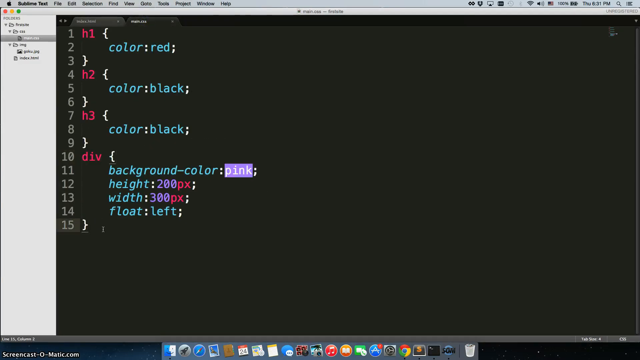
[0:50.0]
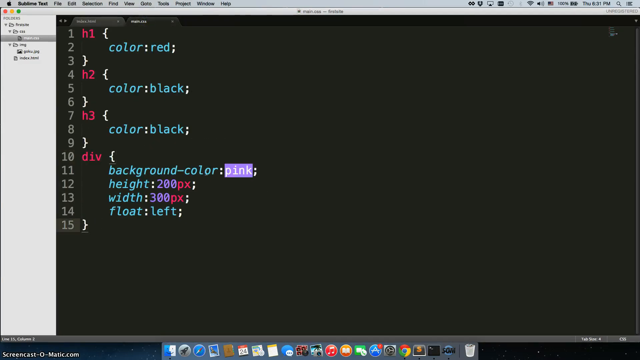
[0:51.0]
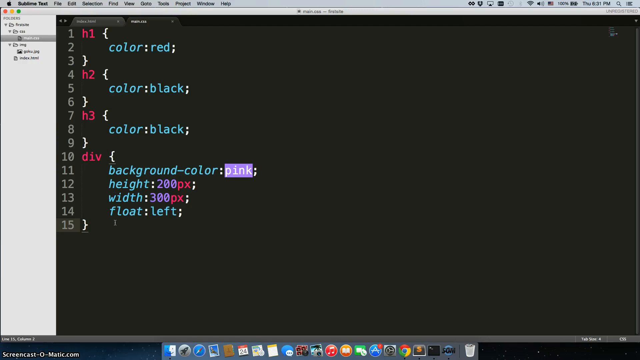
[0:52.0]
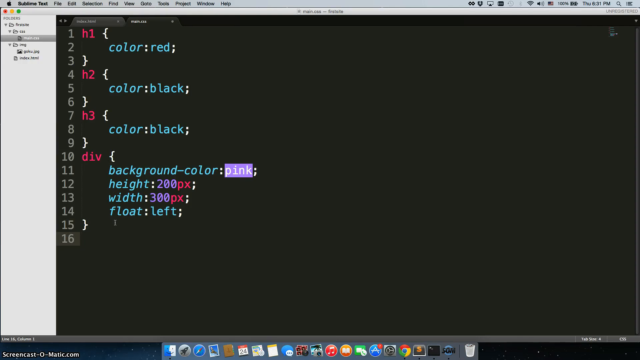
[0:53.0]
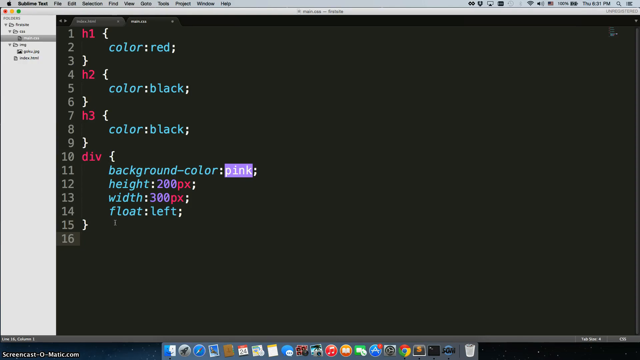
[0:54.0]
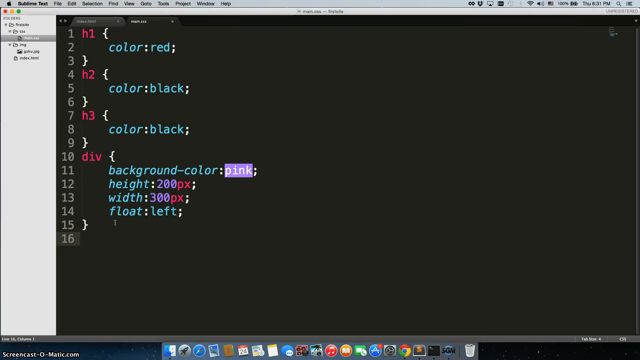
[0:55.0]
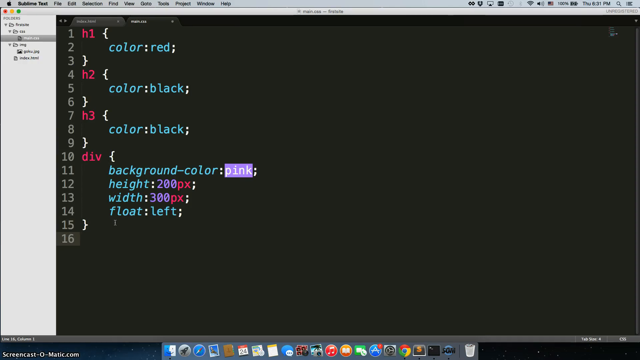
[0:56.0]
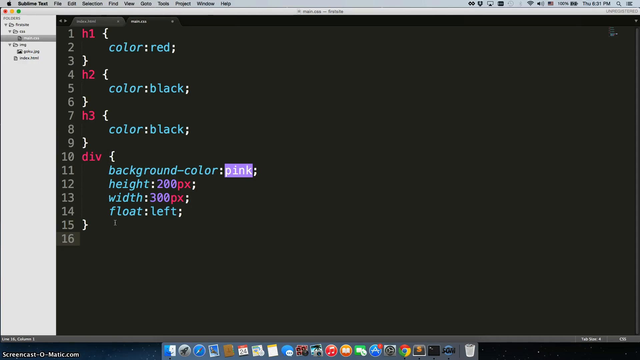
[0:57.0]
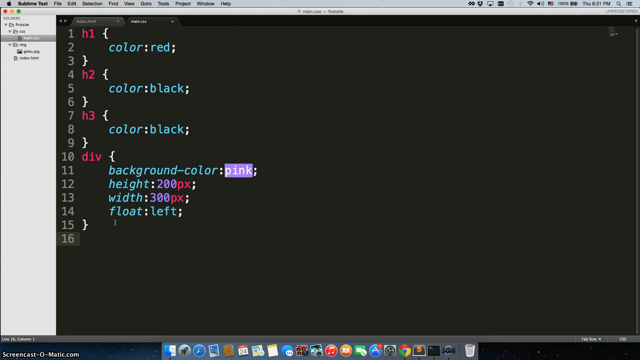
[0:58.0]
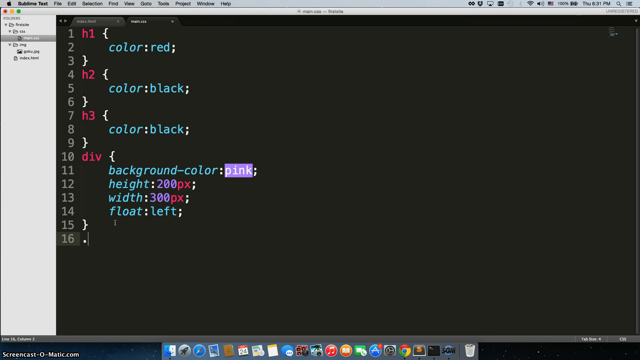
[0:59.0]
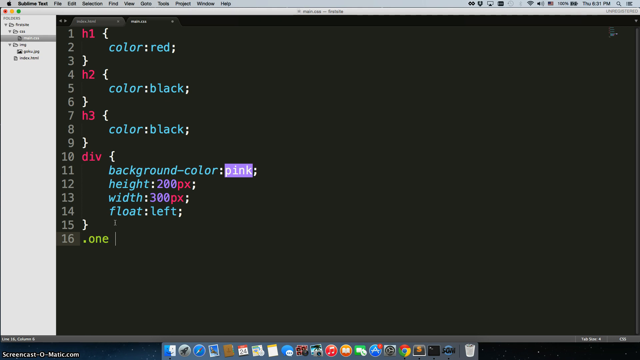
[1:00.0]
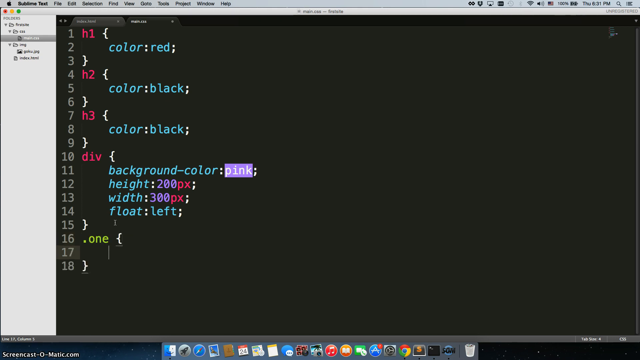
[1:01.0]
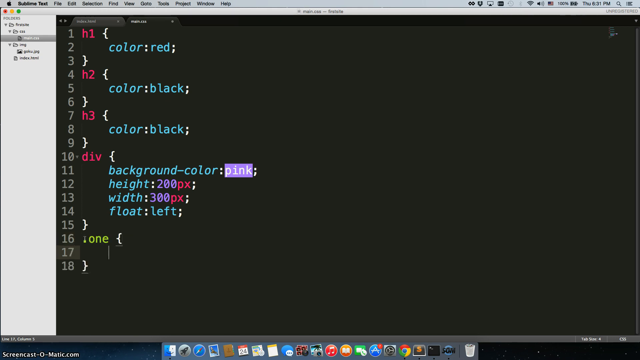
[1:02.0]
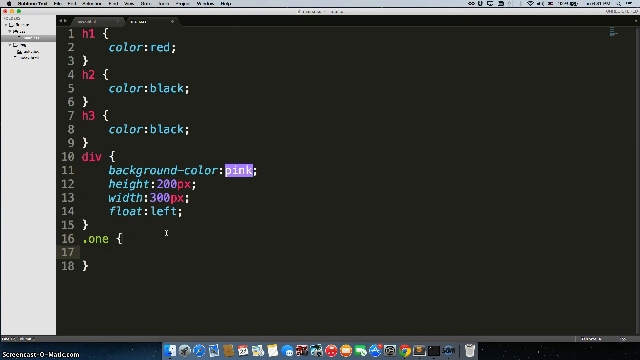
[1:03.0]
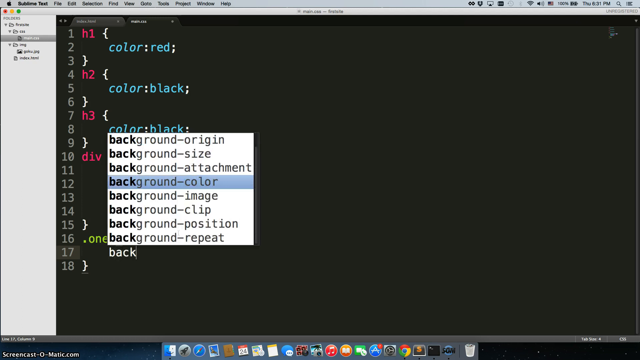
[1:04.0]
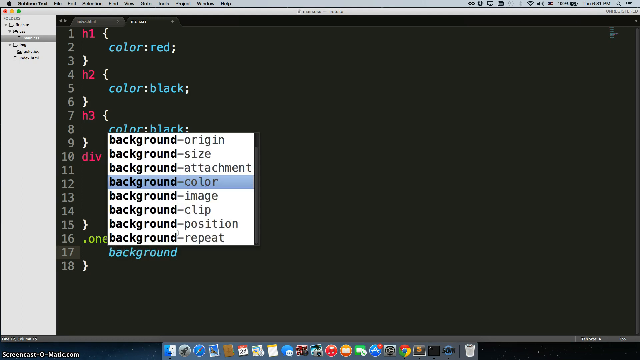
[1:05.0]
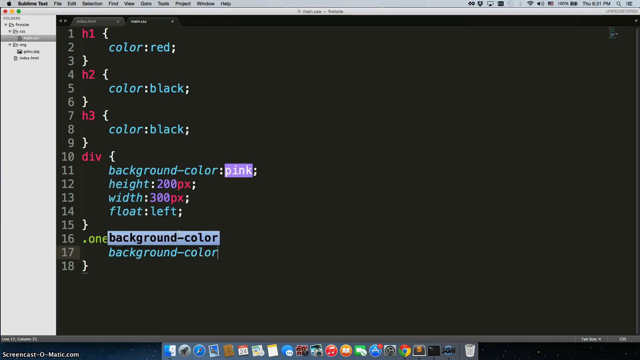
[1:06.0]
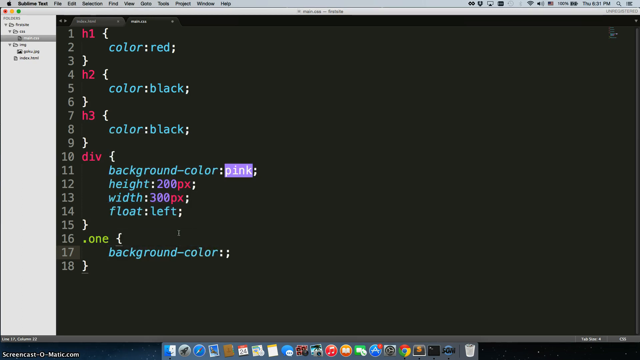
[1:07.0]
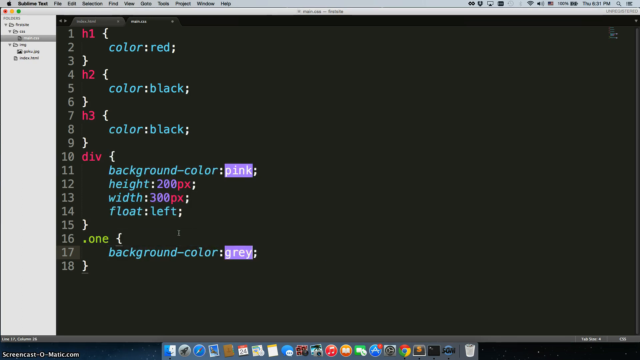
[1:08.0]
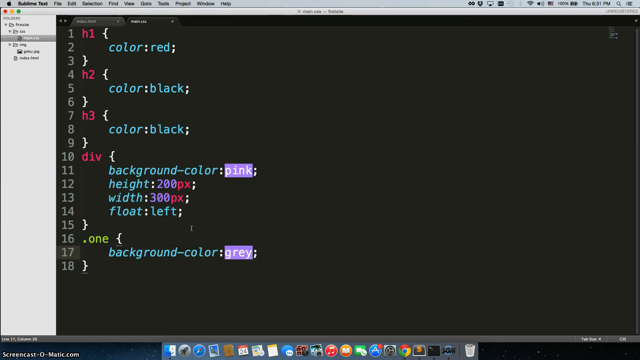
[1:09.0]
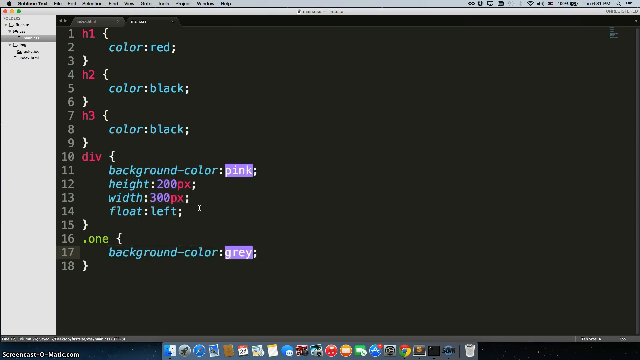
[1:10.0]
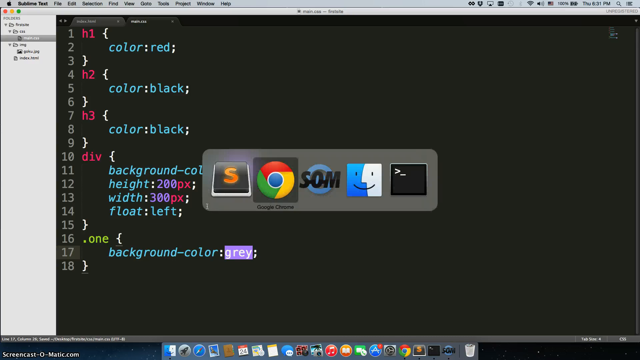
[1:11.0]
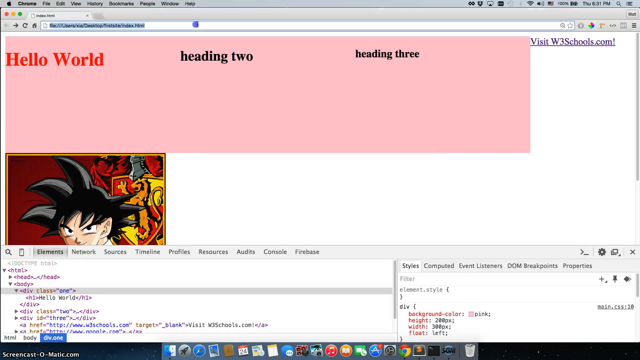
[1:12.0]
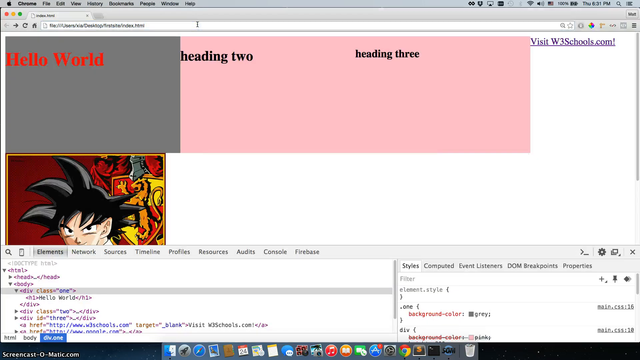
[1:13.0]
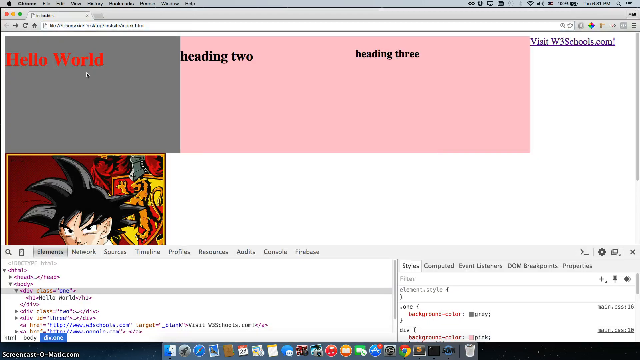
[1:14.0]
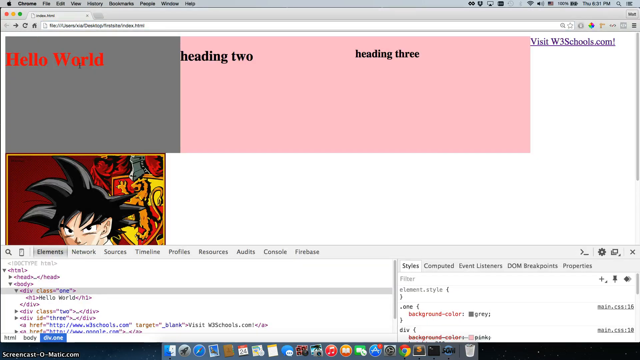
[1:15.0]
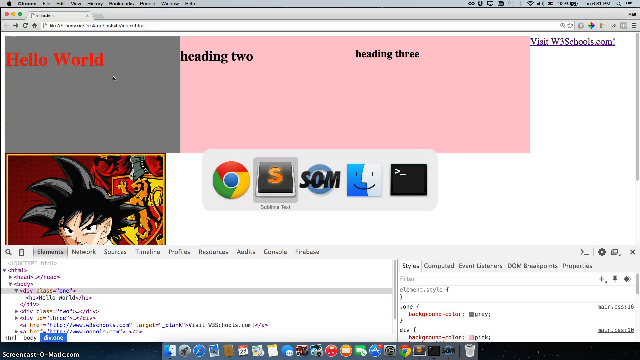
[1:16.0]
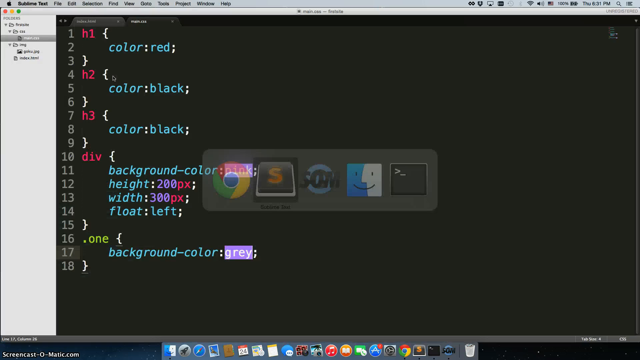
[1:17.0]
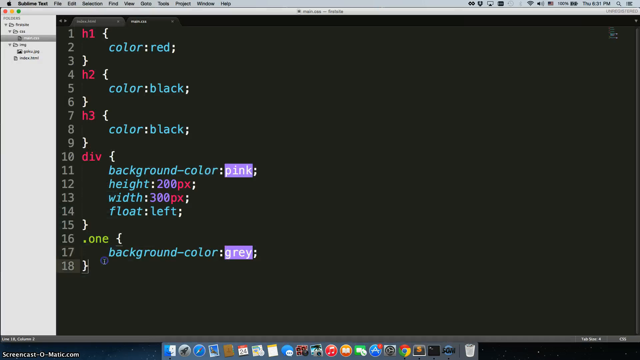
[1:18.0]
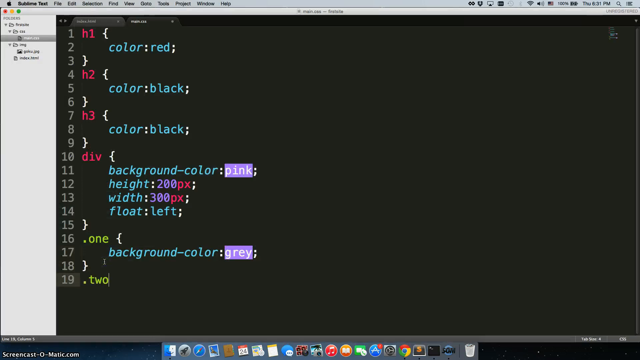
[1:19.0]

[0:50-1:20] The cursor moves around on the coding screen, and then a curly bracket, "background colour", a colon and "grey" are typed. The text is copied and pasted into the Google Chrome text bar, and one of the boxes in Chrome, containing the text "Hello World", turns grey. The view switches back to the coding window with text in sea green and red. At the end there is text starting with 2, with a dot and a curly bracket. The coding window shows sea green and red text with white curly brackets, and lines numbered from one to fifteen.